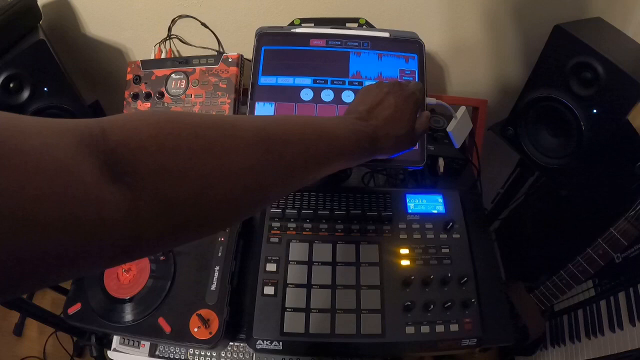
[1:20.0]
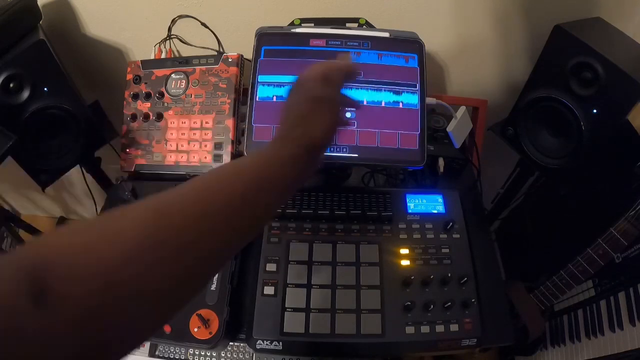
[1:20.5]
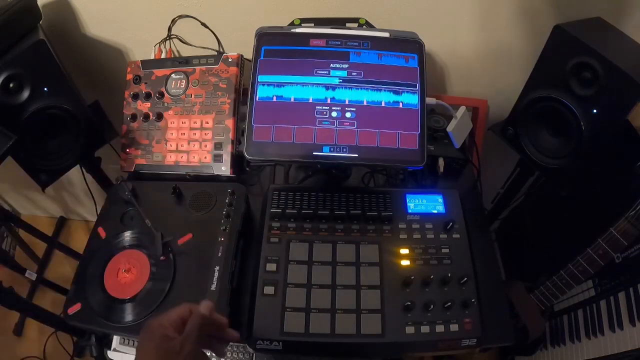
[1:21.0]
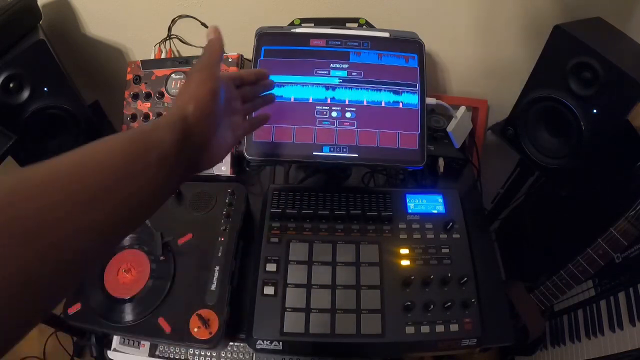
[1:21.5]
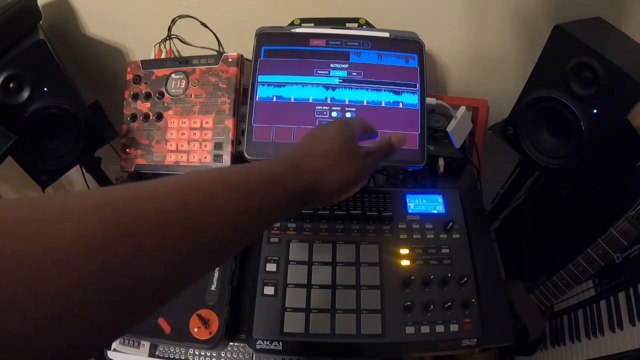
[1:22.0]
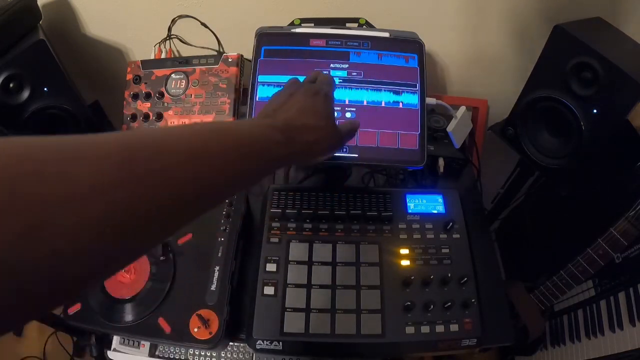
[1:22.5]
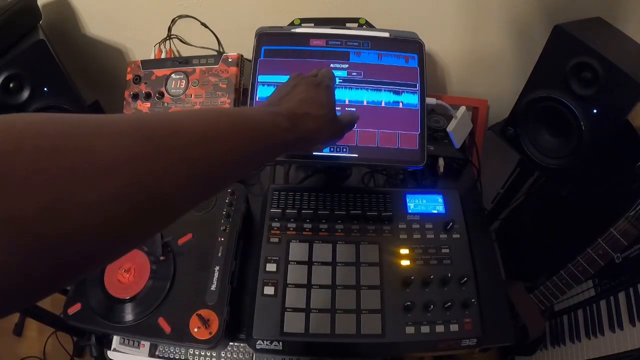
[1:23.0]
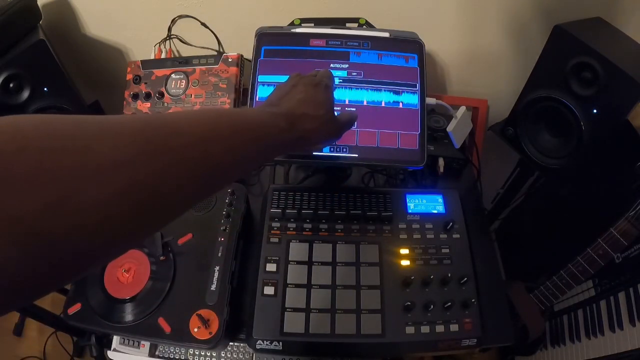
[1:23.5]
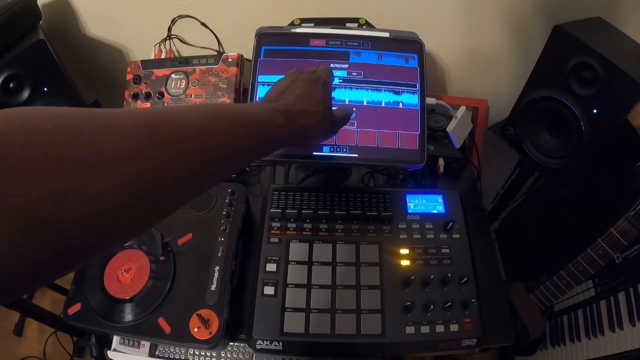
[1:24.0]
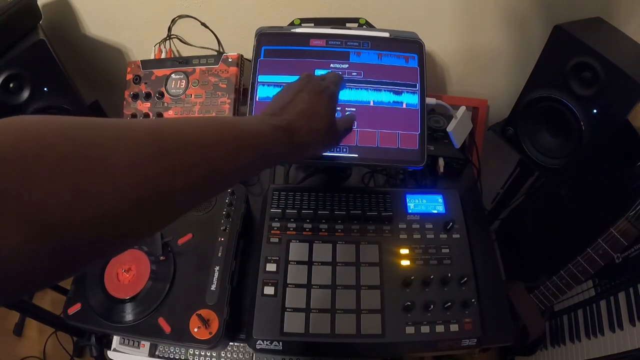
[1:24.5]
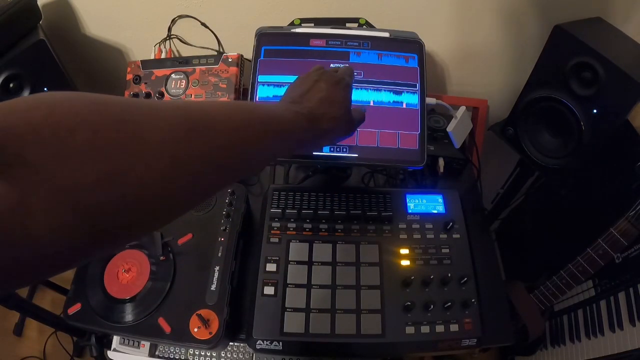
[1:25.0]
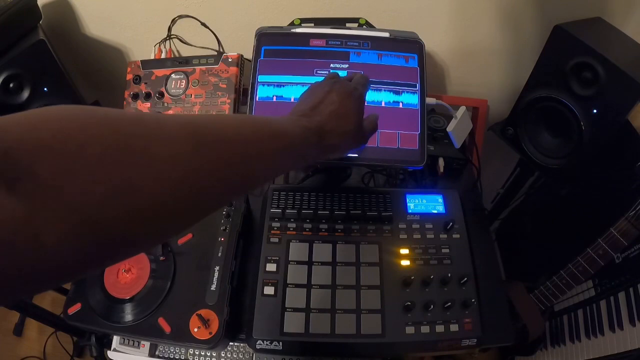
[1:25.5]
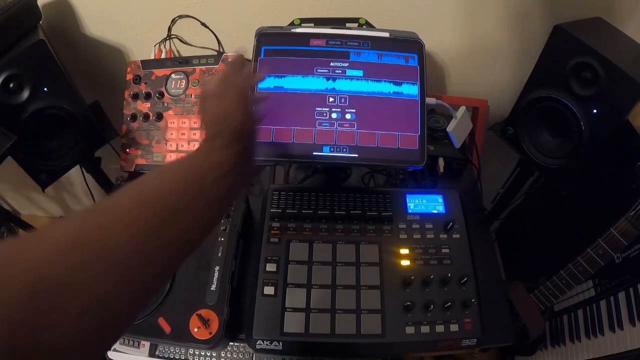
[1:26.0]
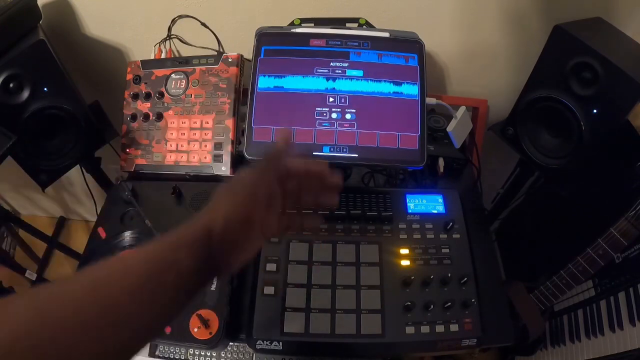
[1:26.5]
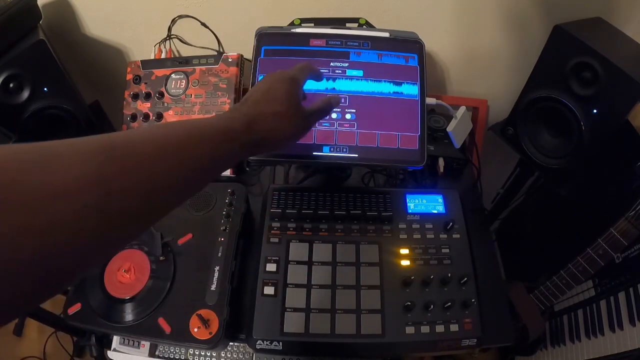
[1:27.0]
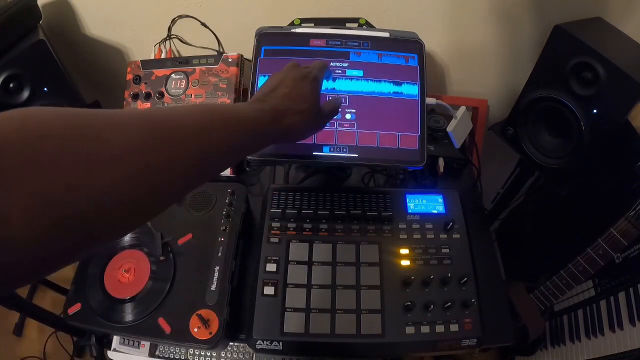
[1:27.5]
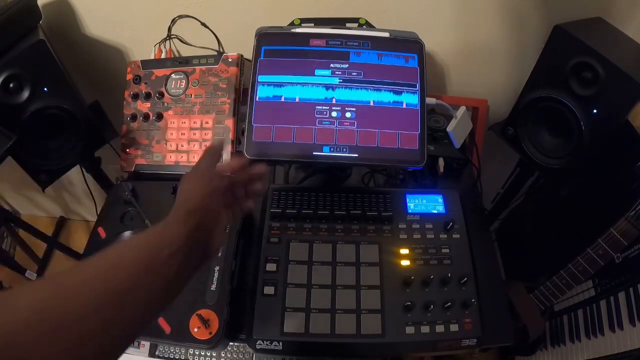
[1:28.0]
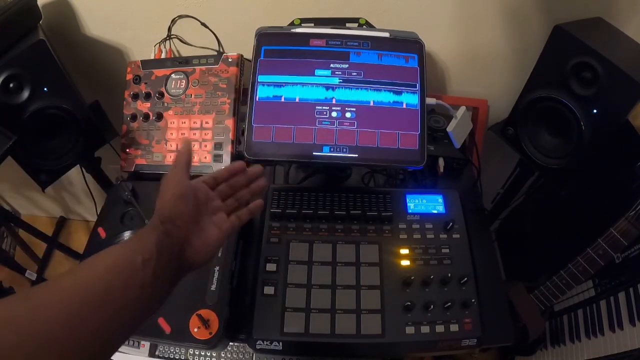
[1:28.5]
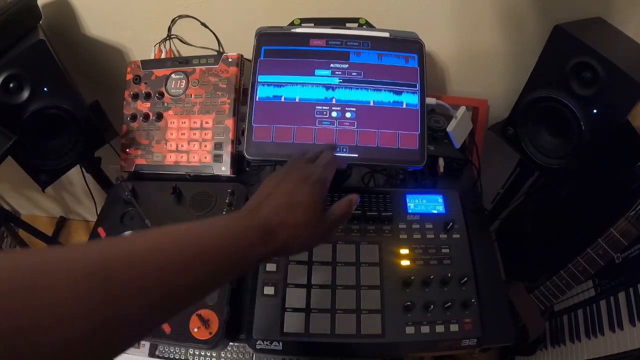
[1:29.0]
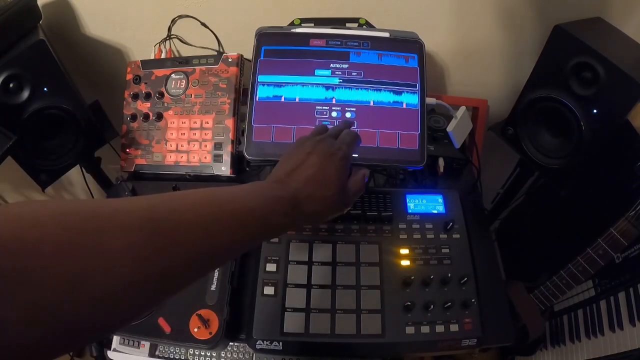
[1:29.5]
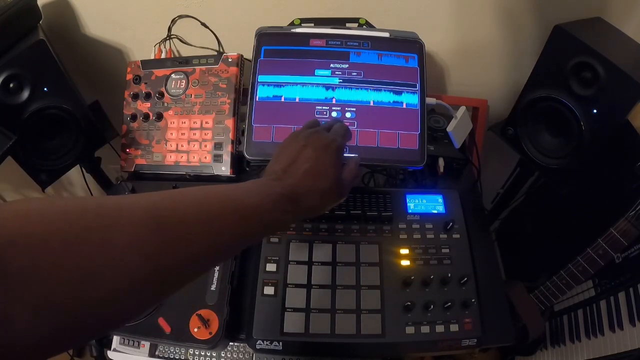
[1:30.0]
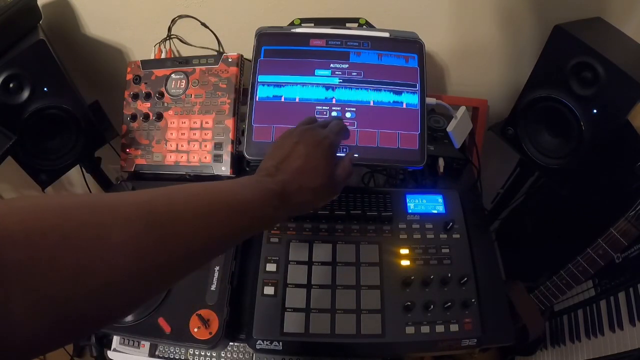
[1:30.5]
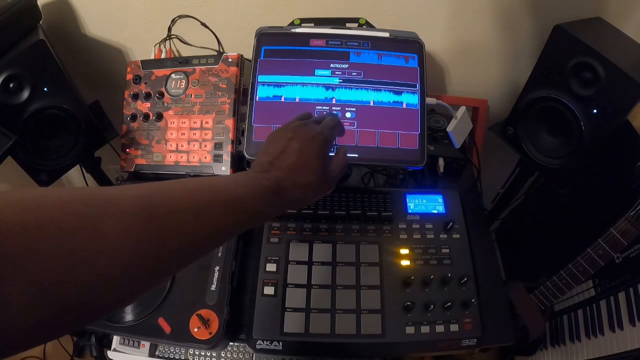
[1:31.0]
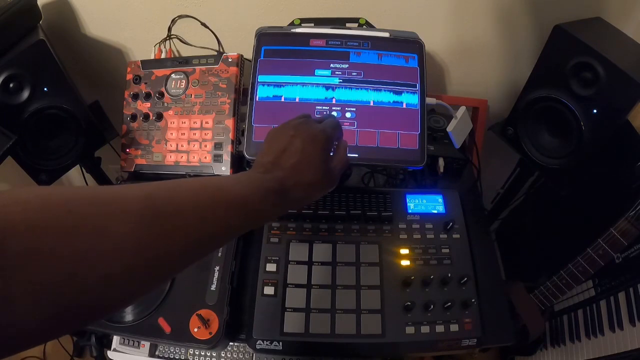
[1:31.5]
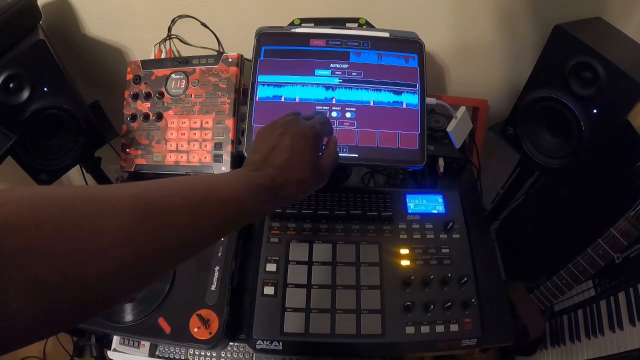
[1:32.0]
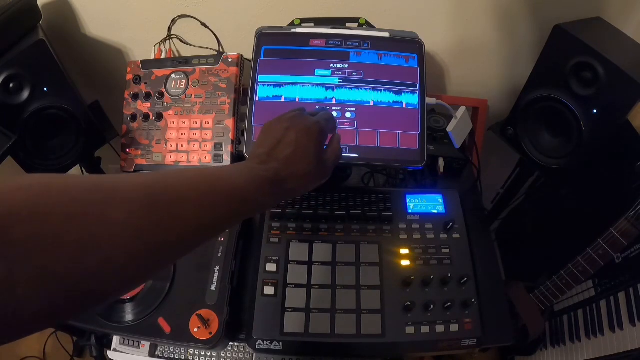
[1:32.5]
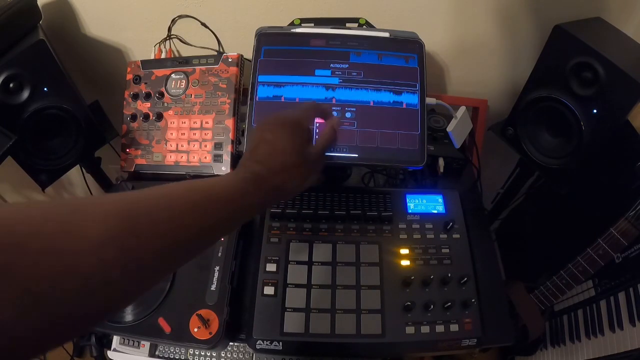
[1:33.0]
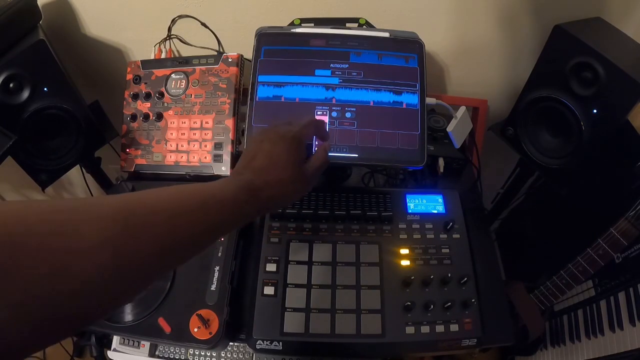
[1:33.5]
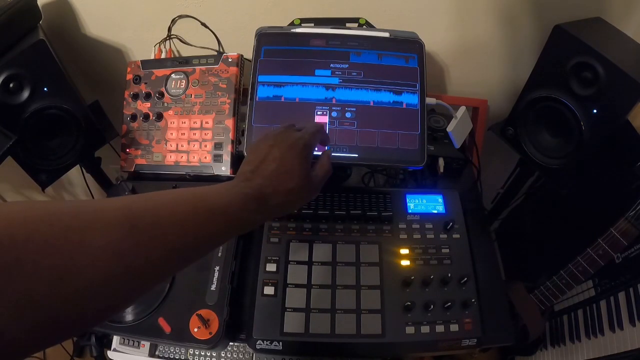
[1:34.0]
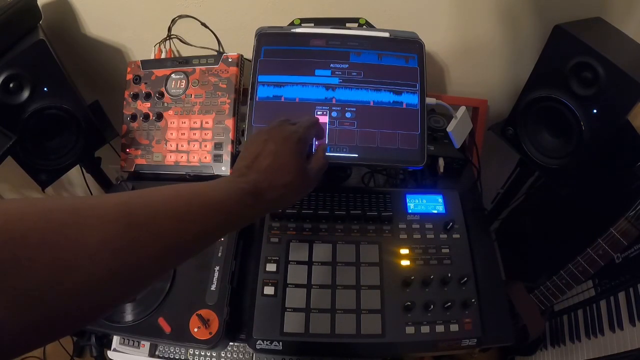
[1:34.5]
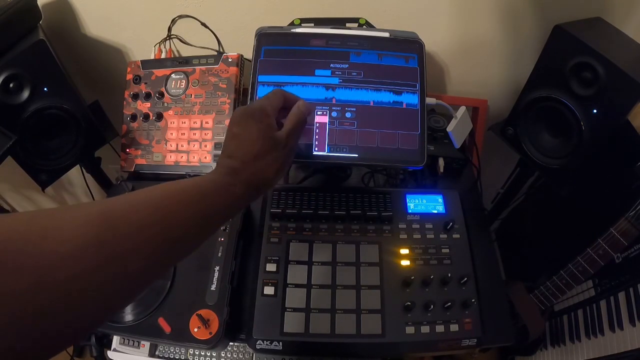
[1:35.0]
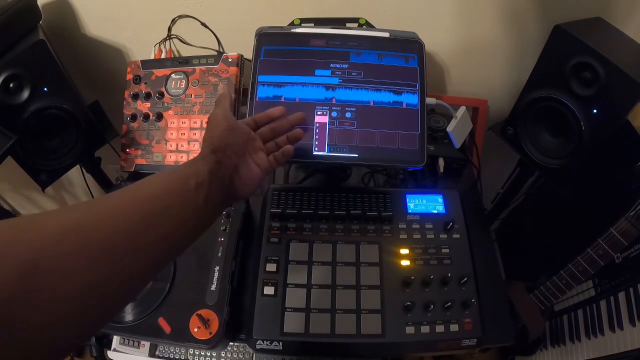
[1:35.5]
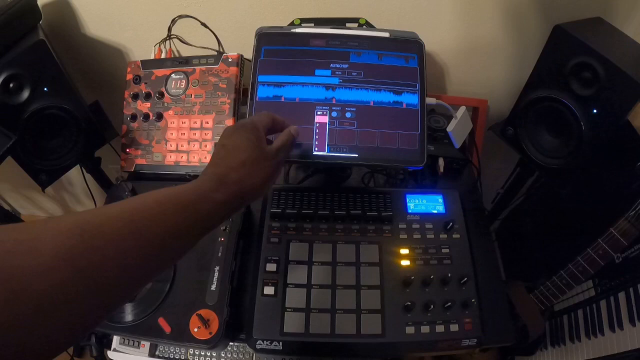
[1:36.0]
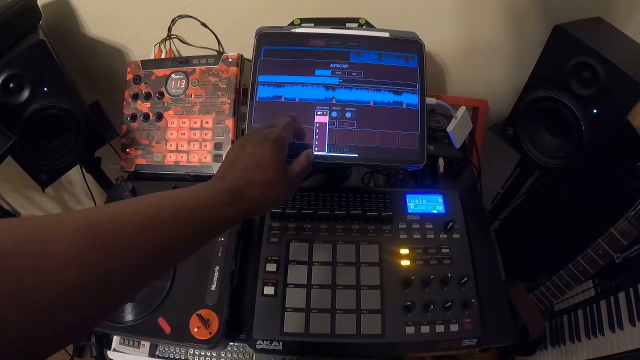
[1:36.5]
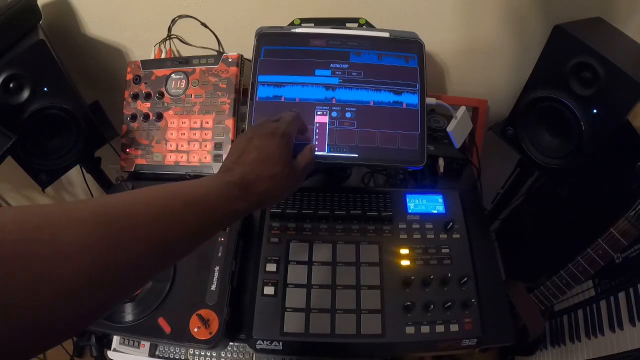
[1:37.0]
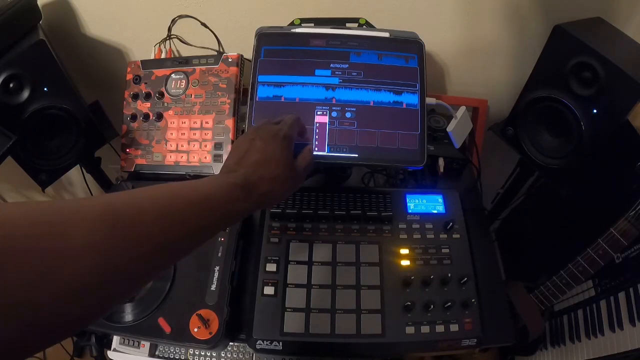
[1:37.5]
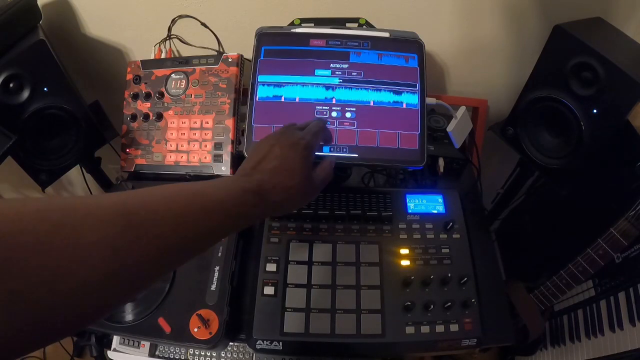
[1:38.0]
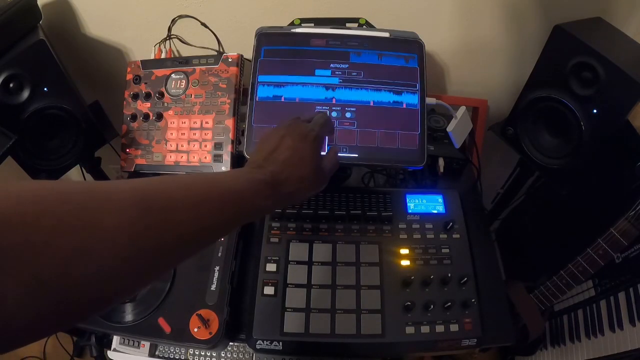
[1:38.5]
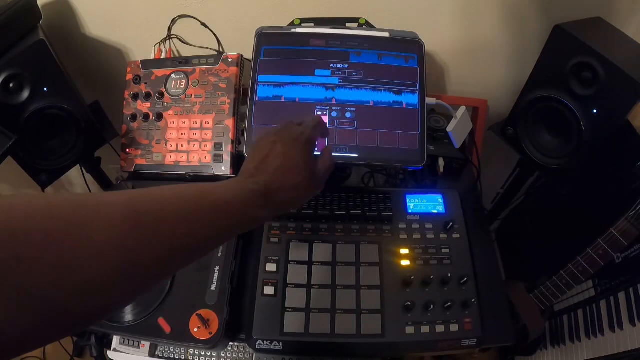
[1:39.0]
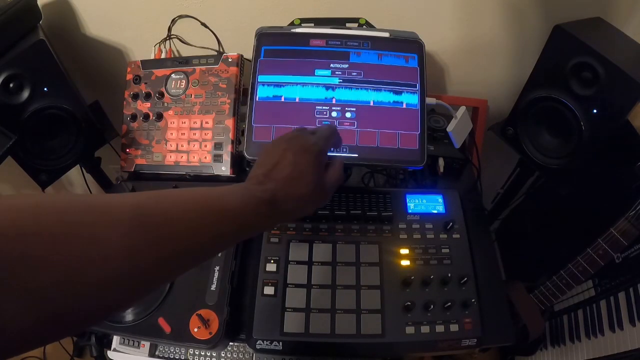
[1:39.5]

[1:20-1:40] The user presses buttons on the touchscreen electronic music equipment with their left hand. Music elements are visible on the screen, and each button press brings up different menus and screens, which they toggle through, selecting options with a finger. The equipment is hooked on to everything else in the setup. There are speakers to the left and the right, and in the lower left is the turntable the person has used to play the vinyl record. The touchscreen monitor is mounted on the setup.